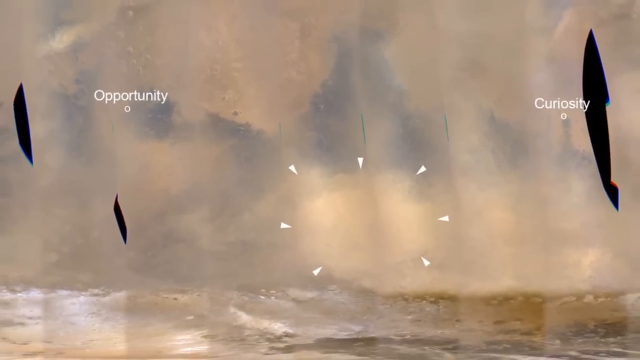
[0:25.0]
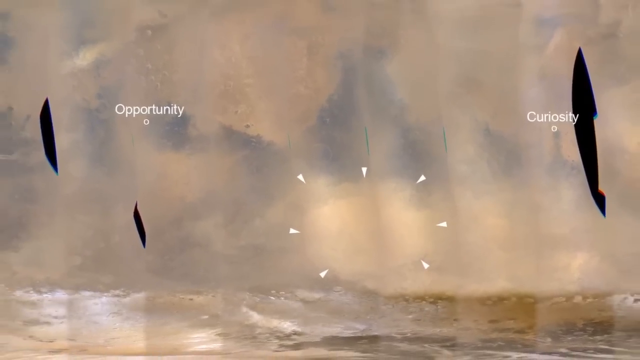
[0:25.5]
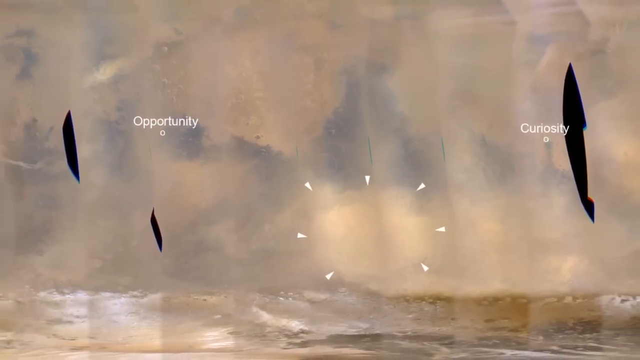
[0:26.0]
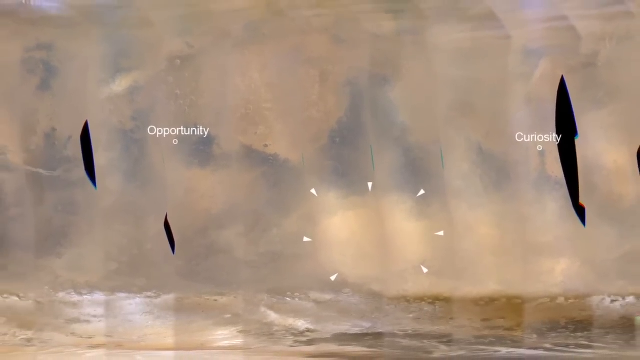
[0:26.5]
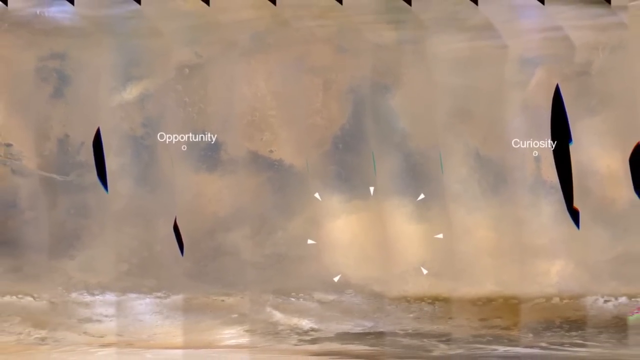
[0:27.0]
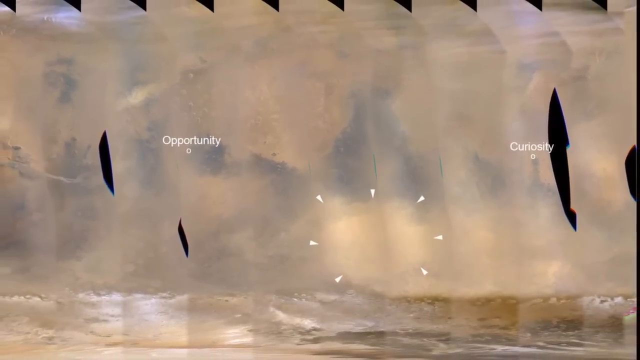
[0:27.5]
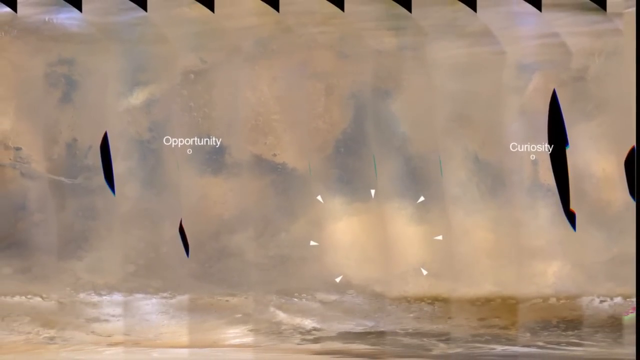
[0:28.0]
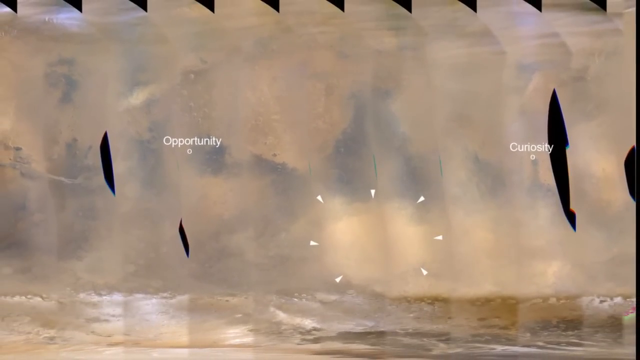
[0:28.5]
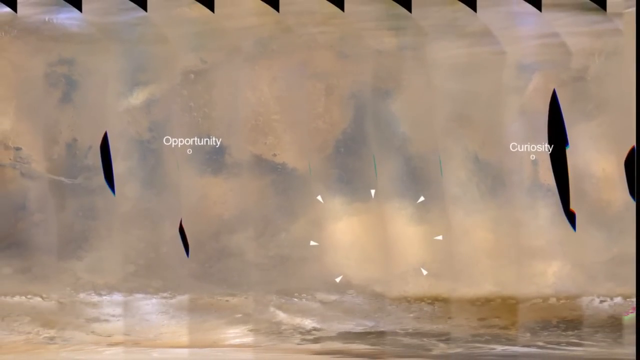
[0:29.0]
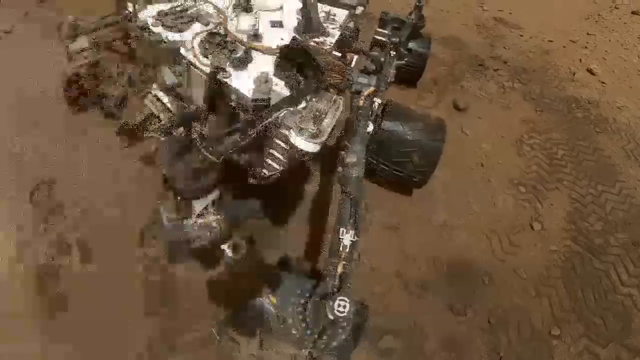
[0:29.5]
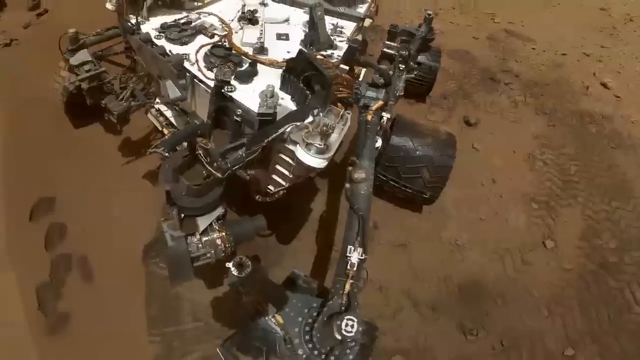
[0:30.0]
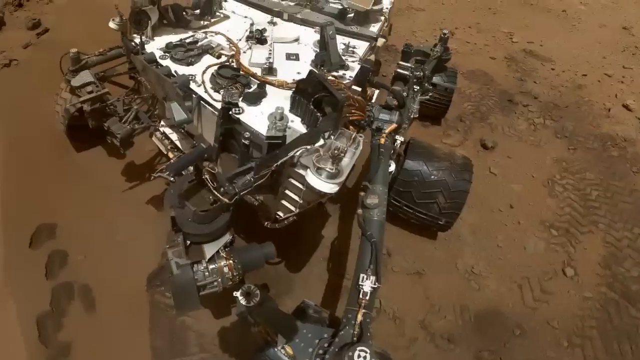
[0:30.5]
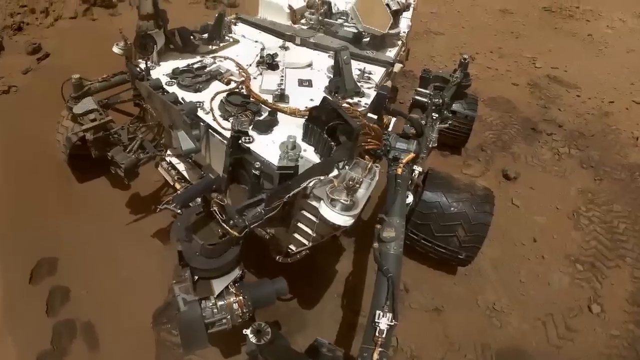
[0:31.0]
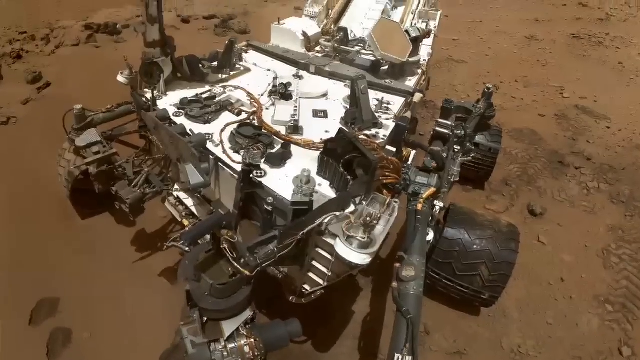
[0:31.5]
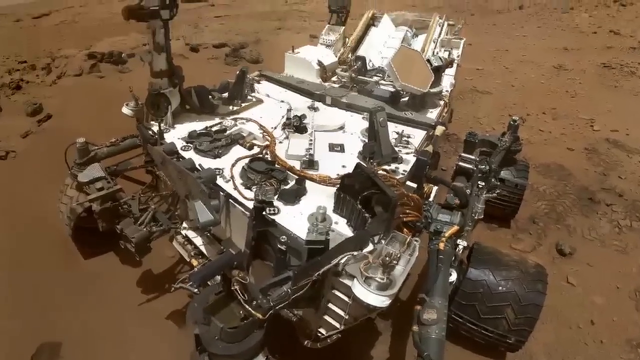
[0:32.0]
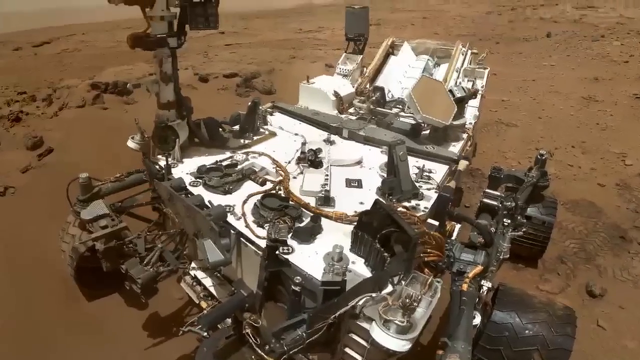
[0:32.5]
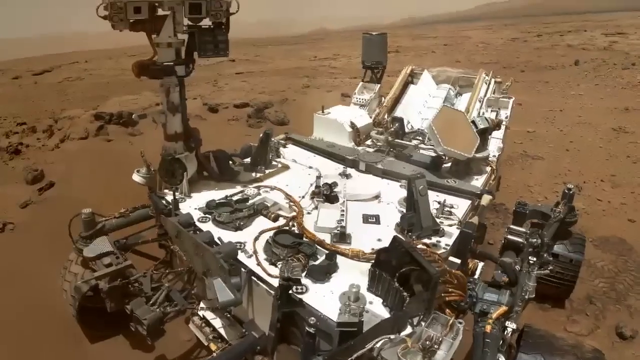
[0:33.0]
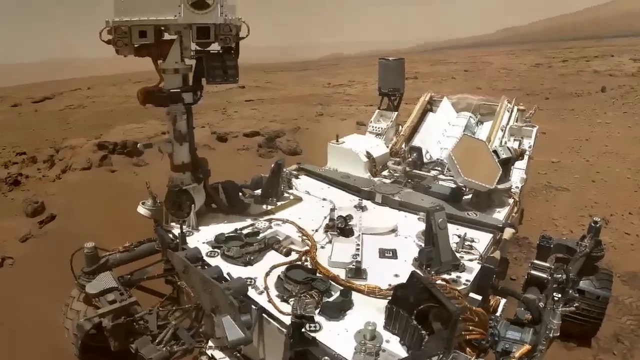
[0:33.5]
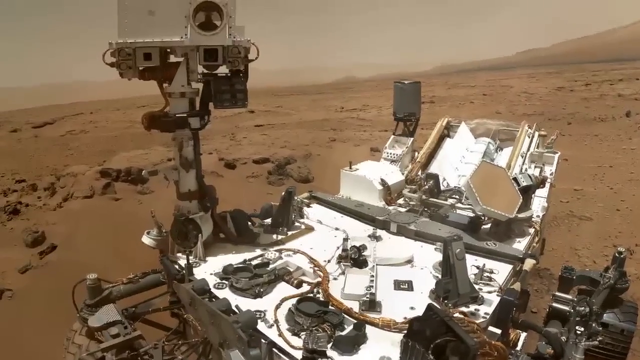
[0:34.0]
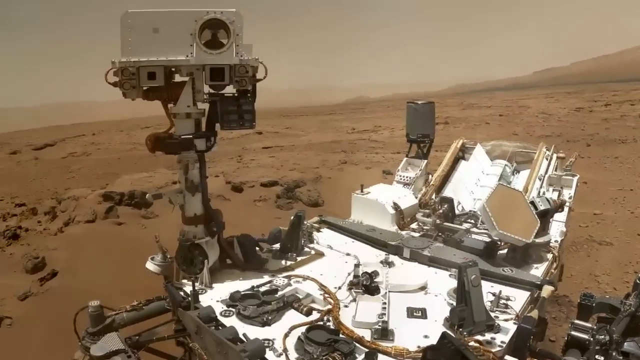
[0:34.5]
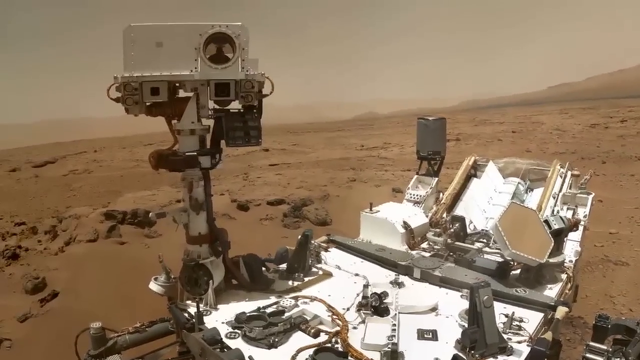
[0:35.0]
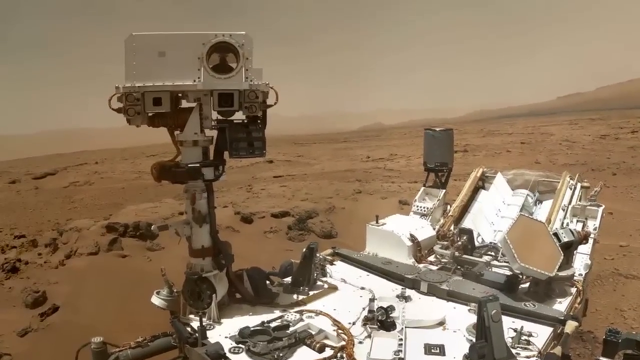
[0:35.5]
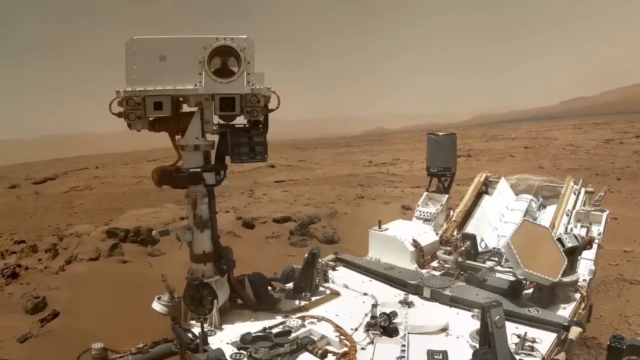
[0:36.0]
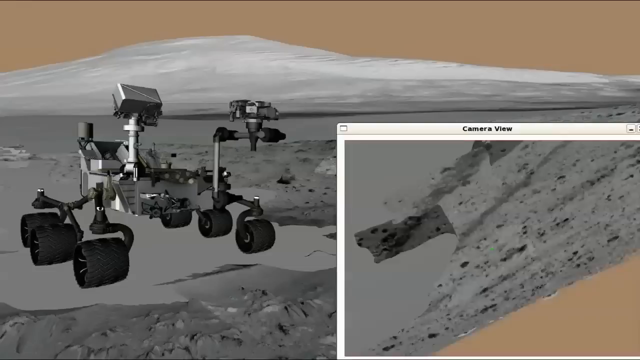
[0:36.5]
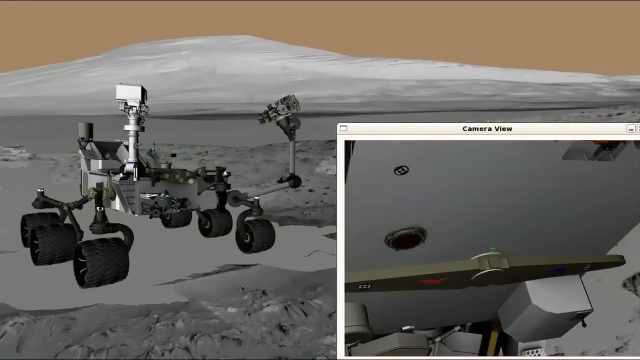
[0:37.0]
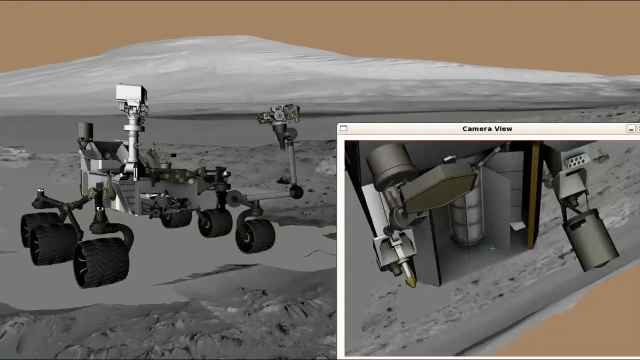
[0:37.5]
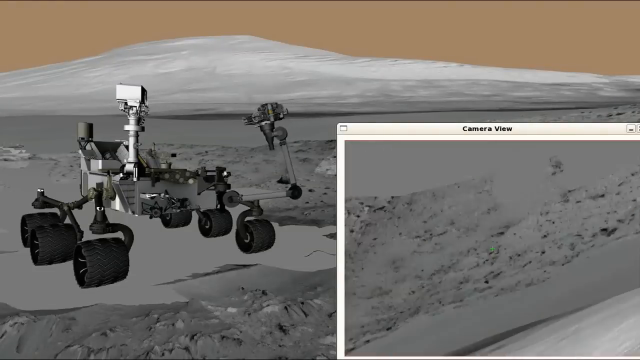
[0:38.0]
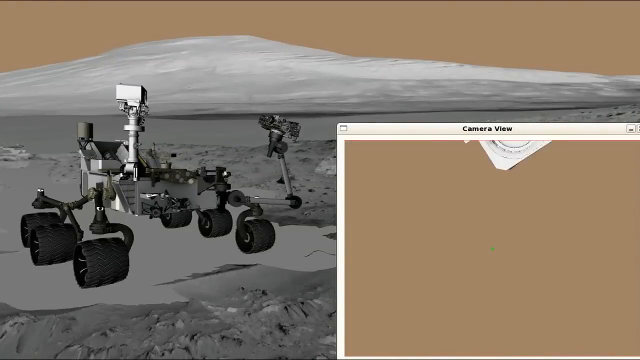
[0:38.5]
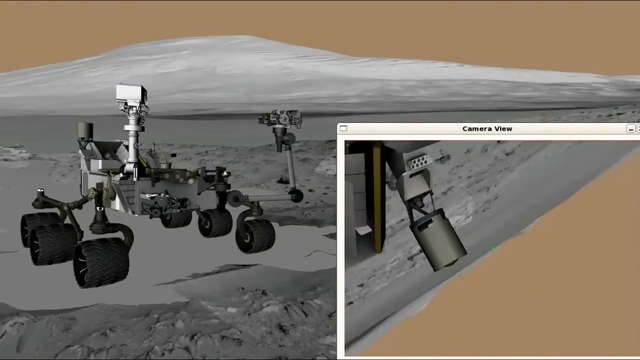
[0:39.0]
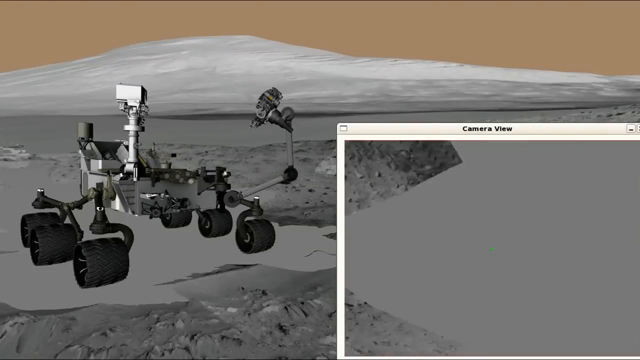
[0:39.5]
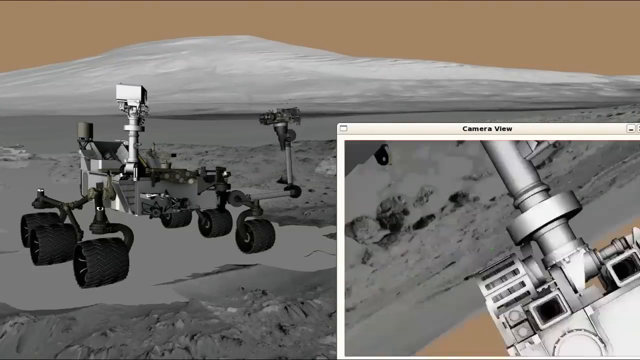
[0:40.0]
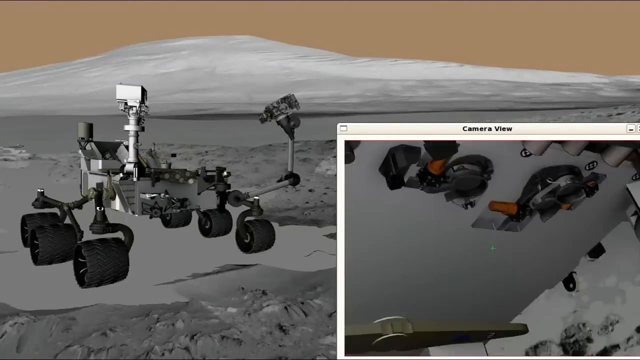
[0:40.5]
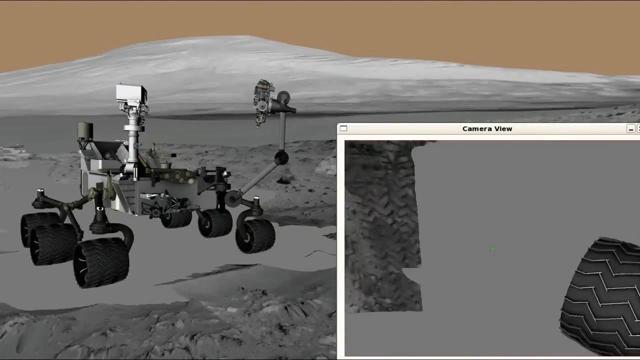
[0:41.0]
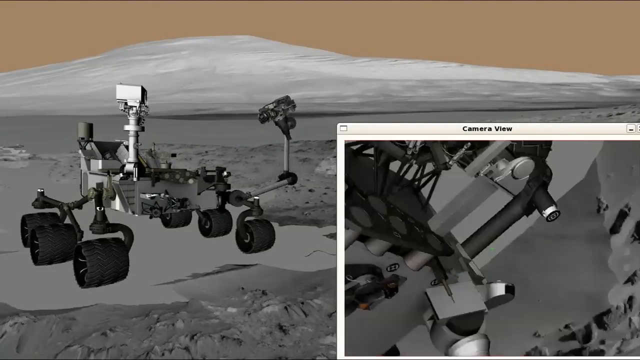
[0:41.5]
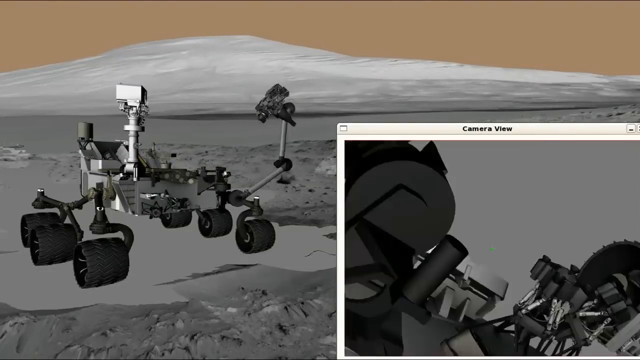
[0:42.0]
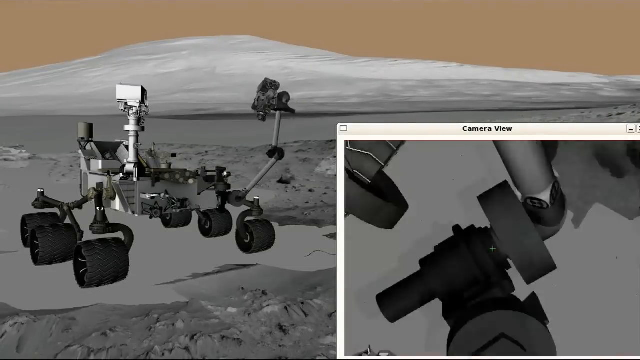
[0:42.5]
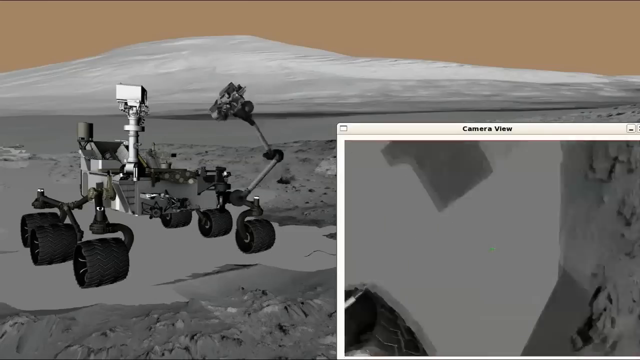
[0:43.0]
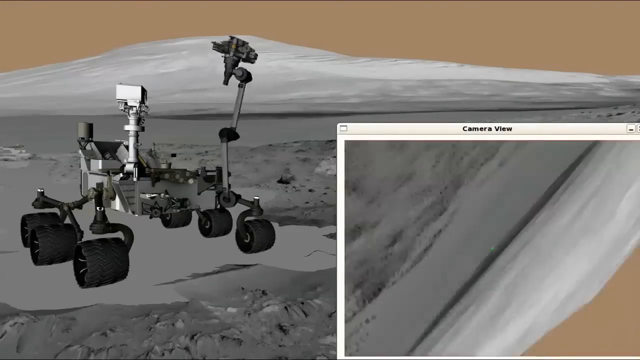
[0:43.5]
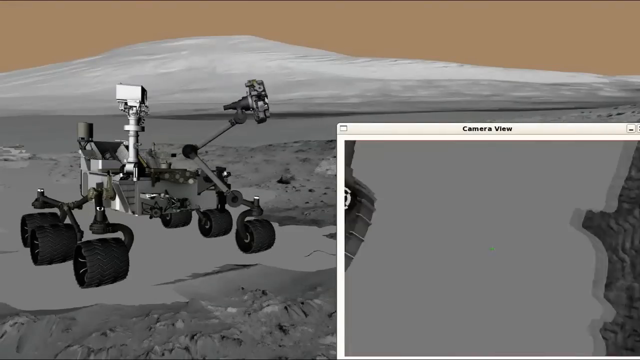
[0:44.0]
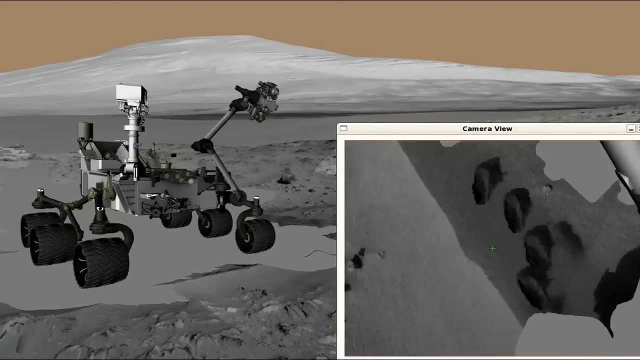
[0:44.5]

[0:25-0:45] The video, Curiosity Roves again, is from November 29th, 2012. Torsten Zorn, MSL tactical, talks to the camera; he has brown hair and wears a red-pink striped shirt. The view zooms in on a diagram of Opportunity and Curiosity, probably some kind of map of Mars, with the two rovers marked with circles and an area highlighted between them. The focus shifts to one of the Mars rovers, zooming in on the upper part of it and its camera, followed by a diagram of the rover moving the camera around: a sort of grayscale image of the rover's movement. The video returns to the picture that seems to be a map showing where the rovers are, then a picture of one of the rovers on the surface of Mars, then the grayscale diagram showing the movement of the camera and maybe what the camera would view in those different positions. It cuts between the map or diagram of the rovers' locations, an image of one of the rovers on the surface, and the mock-up grayscale diagram of how the camera moves and what it looks at. The view sort of zooms along to show the rover on Mars, and the grayscale, sort of mocked-up video of the camera's motion appears again.